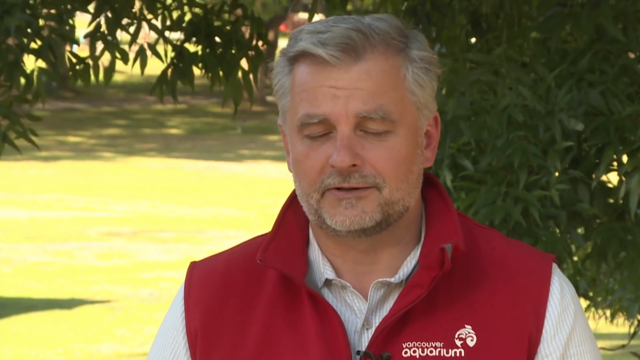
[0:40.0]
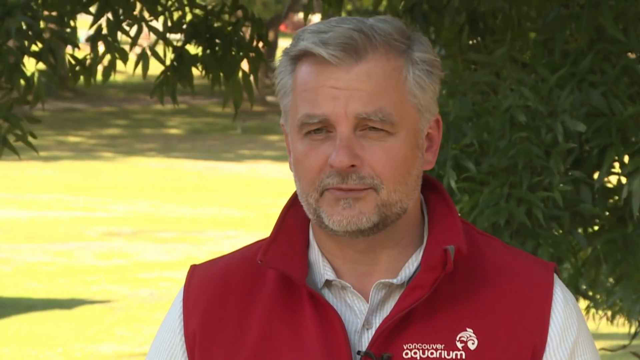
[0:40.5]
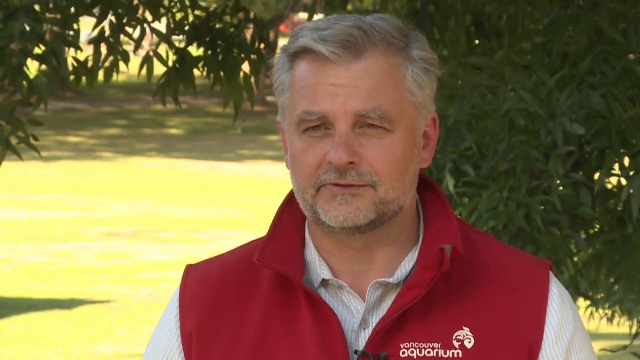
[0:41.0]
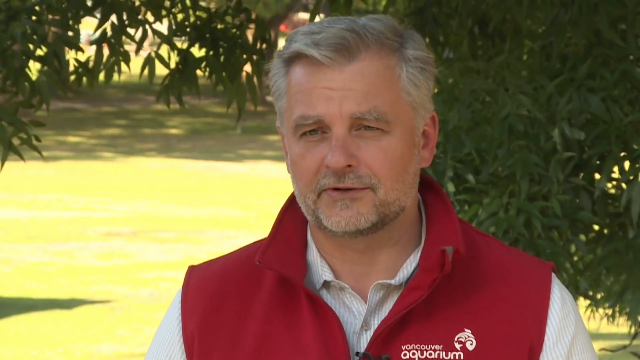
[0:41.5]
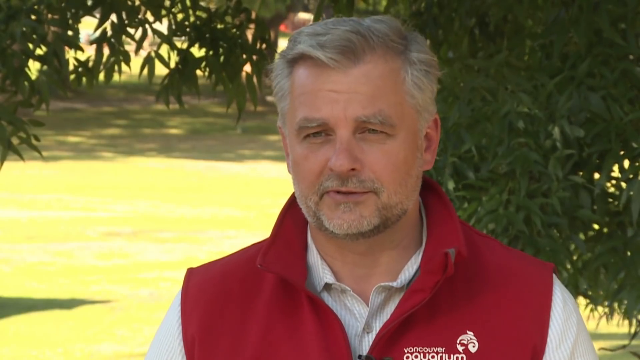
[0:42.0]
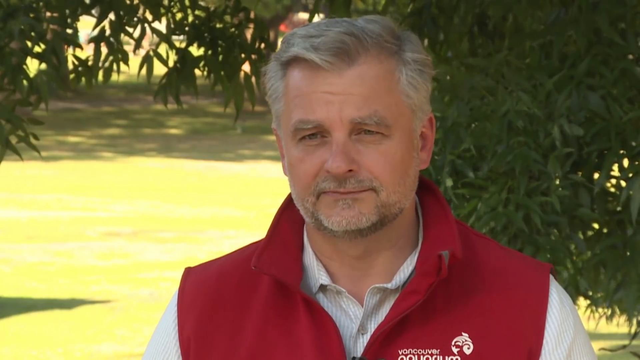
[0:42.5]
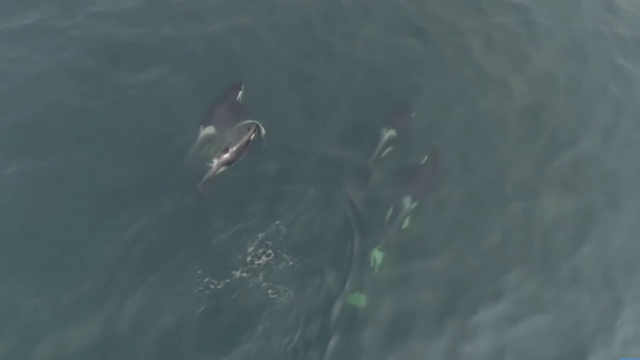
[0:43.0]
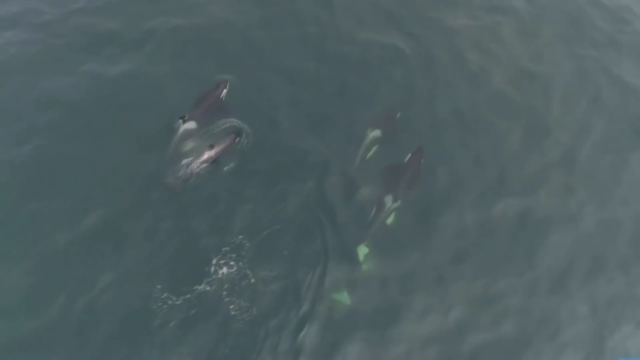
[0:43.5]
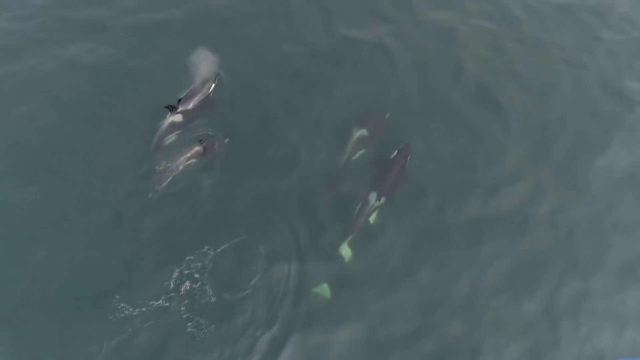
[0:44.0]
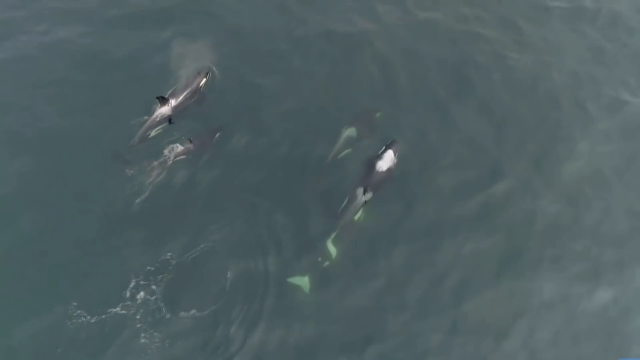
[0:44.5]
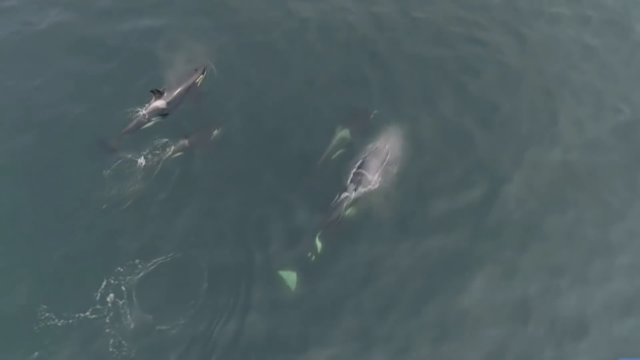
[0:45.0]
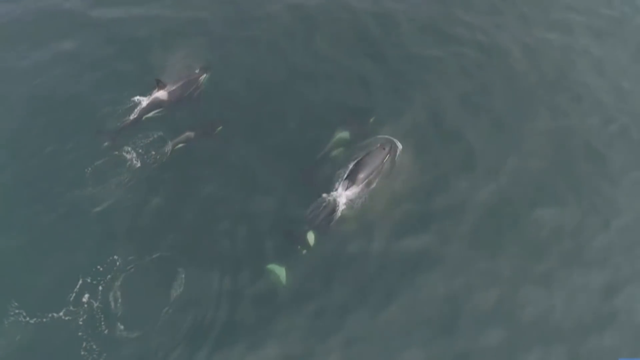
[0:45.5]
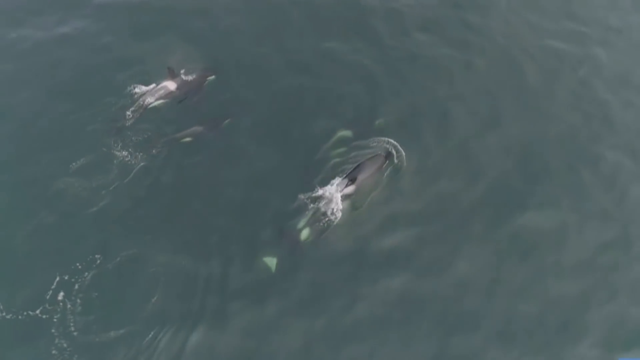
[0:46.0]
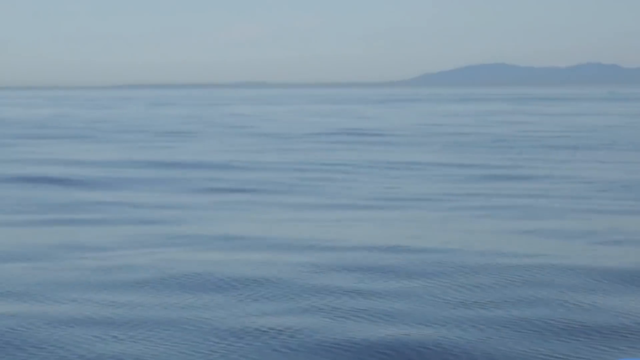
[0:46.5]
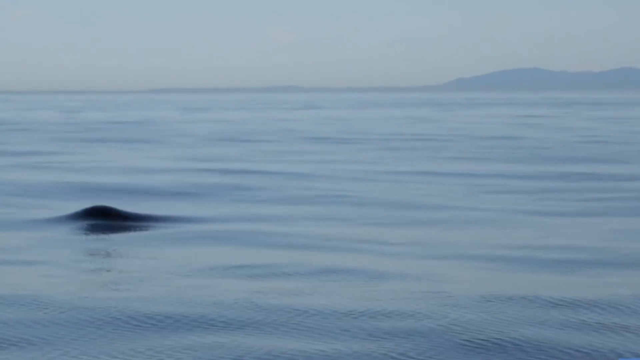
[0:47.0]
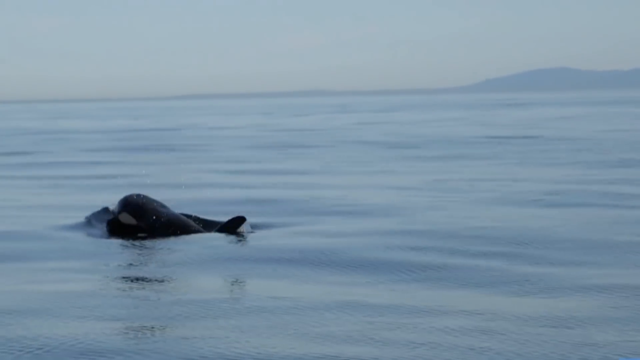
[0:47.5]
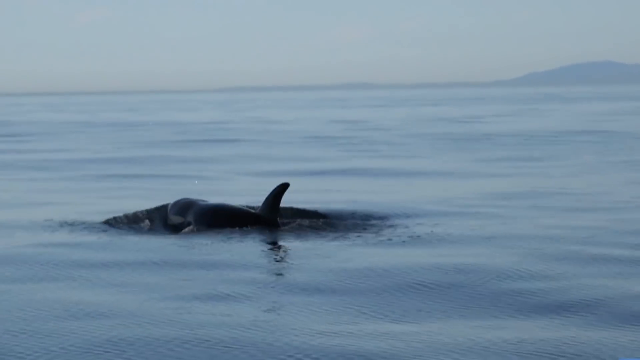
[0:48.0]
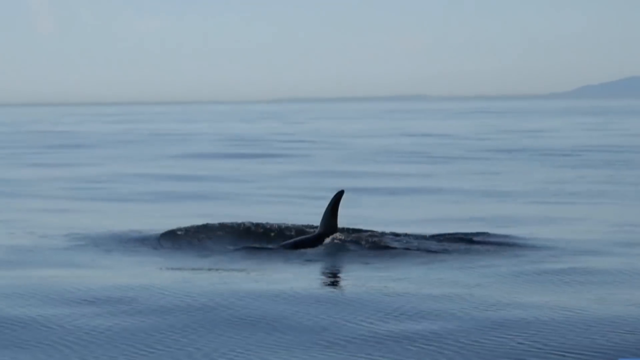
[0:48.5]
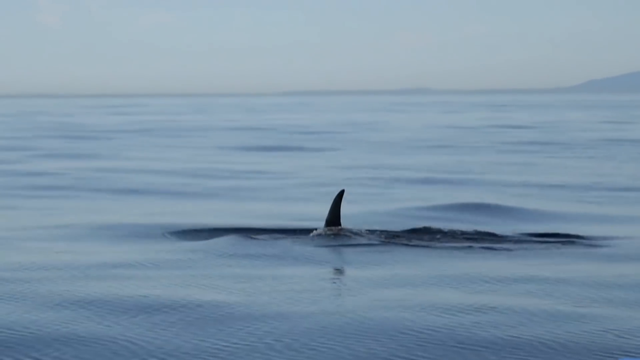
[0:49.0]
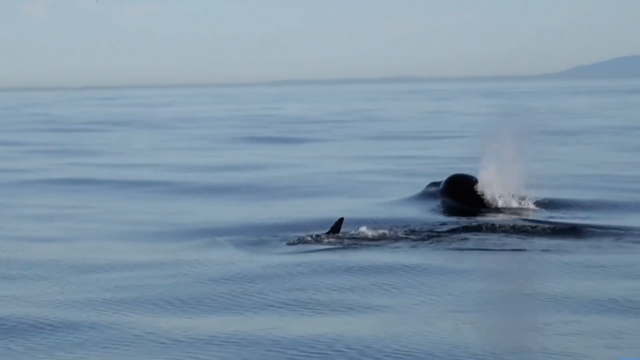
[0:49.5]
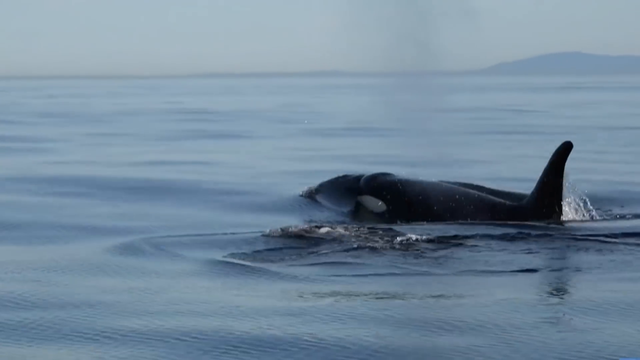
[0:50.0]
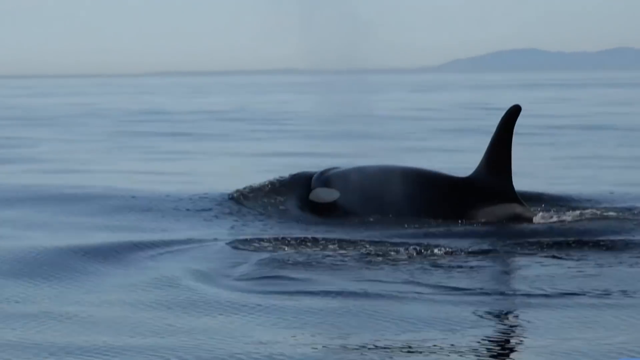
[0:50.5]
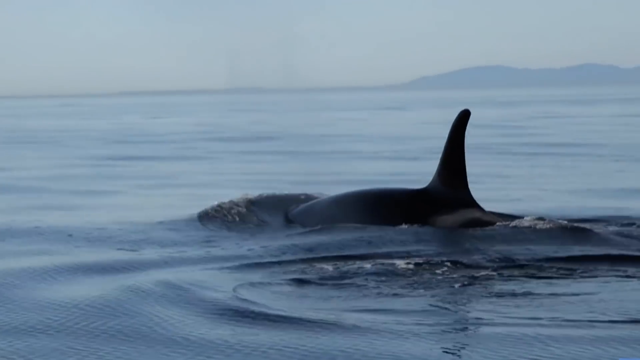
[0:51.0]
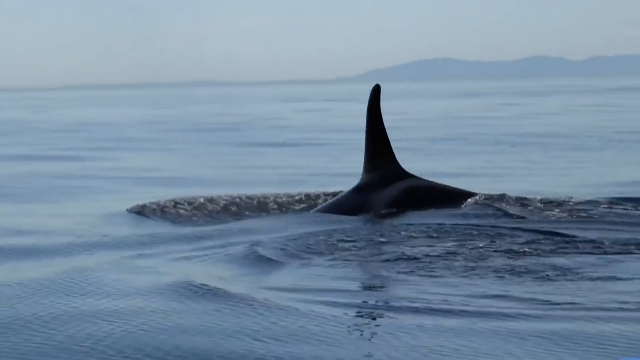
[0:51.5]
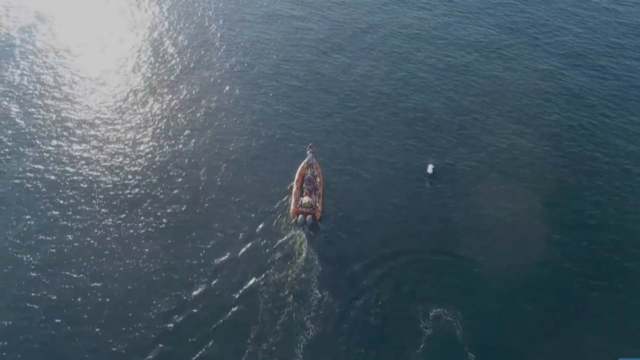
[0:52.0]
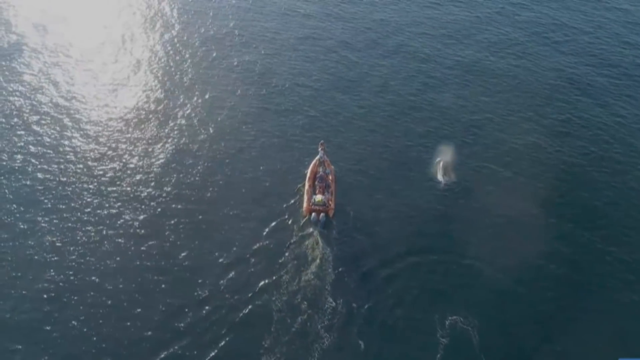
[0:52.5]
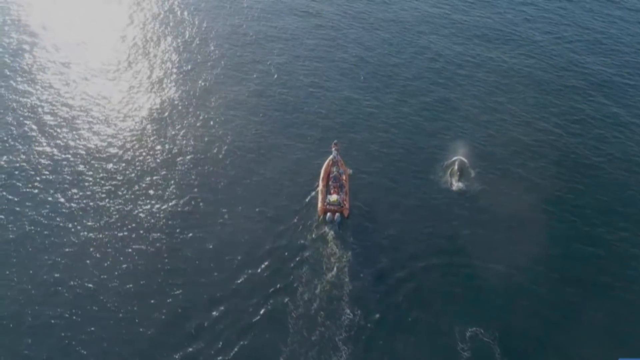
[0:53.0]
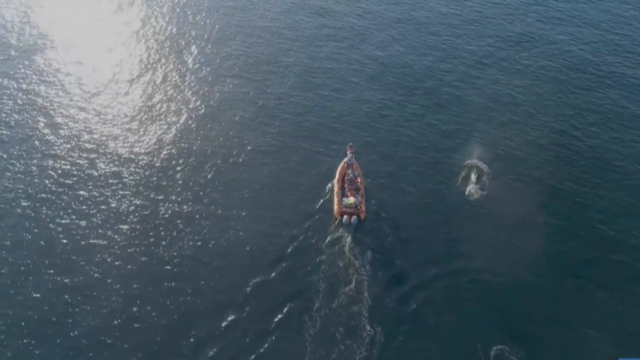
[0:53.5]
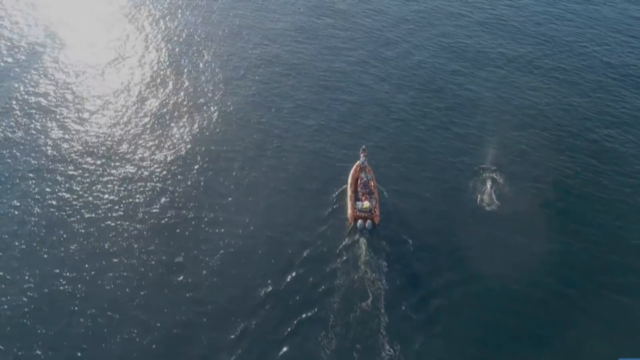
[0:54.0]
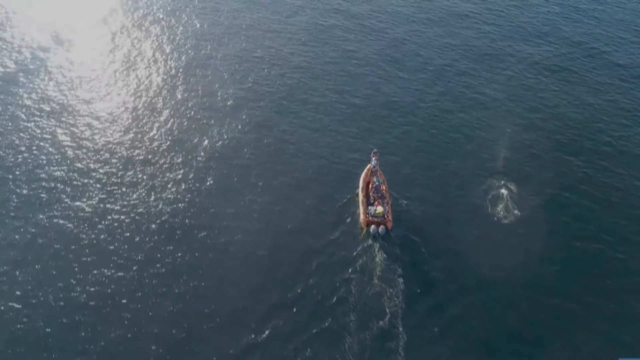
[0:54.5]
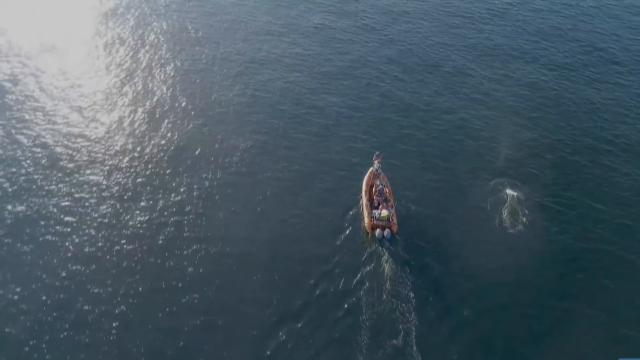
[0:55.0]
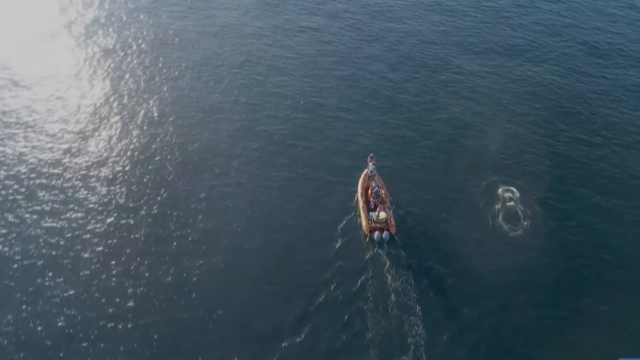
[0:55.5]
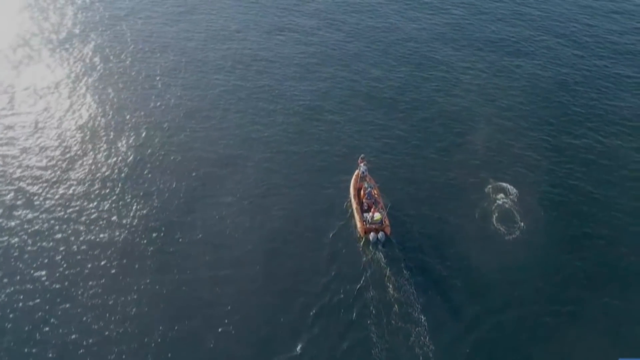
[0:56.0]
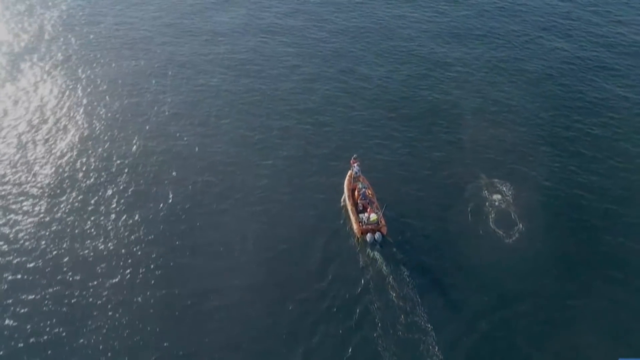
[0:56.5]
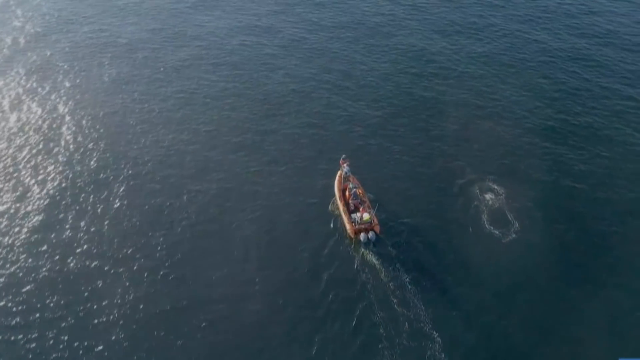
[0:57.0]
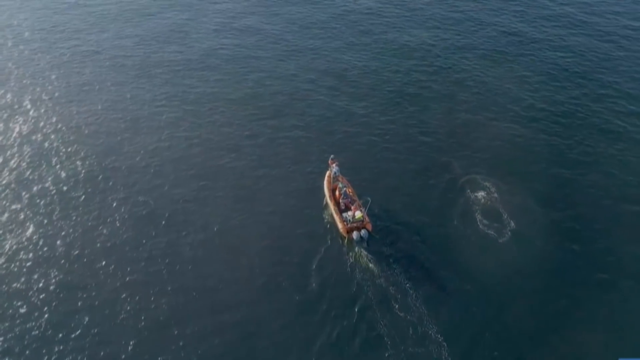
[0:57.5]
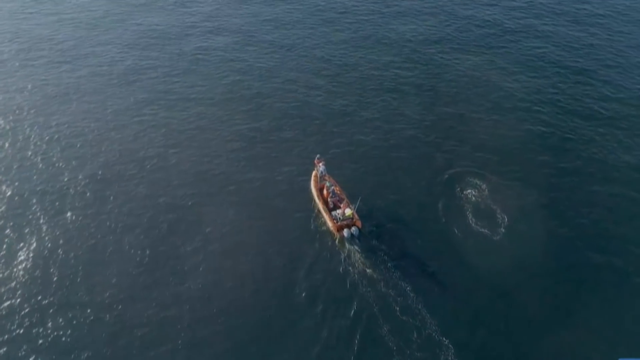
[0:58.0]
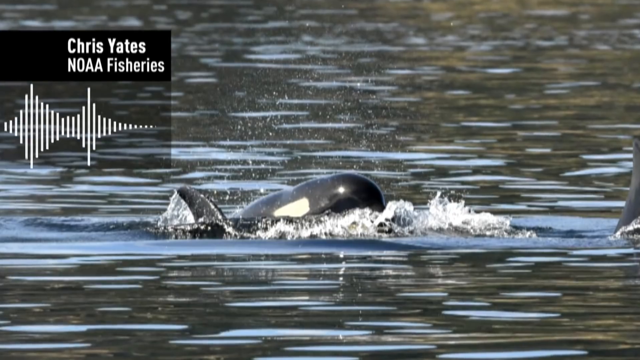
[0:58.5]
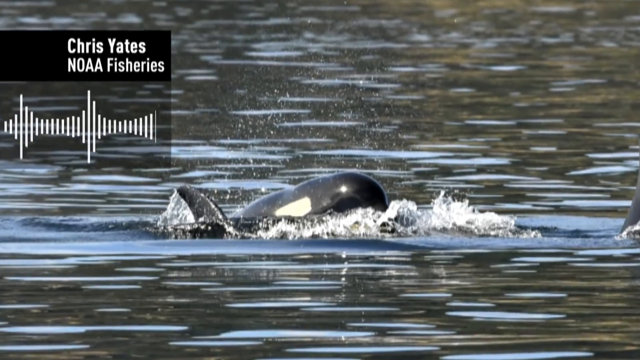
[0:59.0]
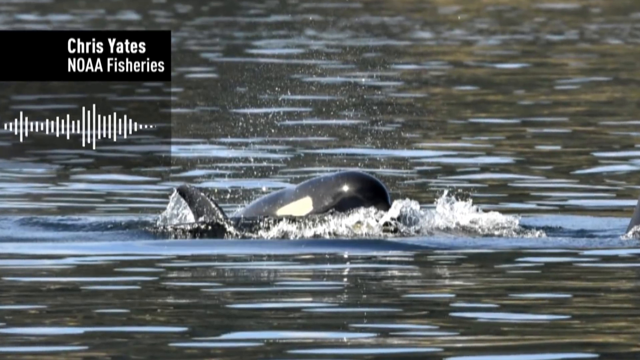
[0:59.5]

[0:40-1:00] The man in the red jacket is shown again. He seems to be talking, apparently in a conversation with someone. Three dolphins then appear: one huge, one small, and a smallest one. A dolphin's tail is visible, and an orange boat drives in the water beside the dolphins. The dolphins swim, lifting their heads or tails out of the water, and wiggle their tails a little. The people on the boat are apparently following the dolphins, taking videos and photos.